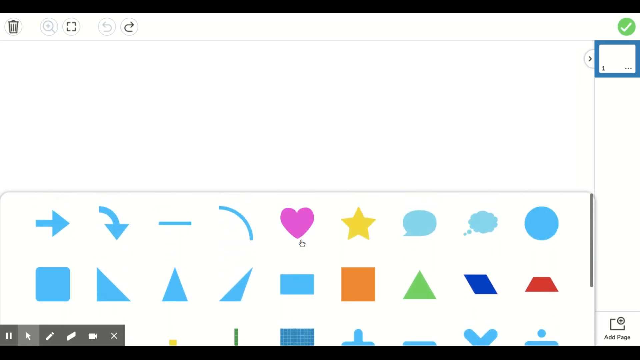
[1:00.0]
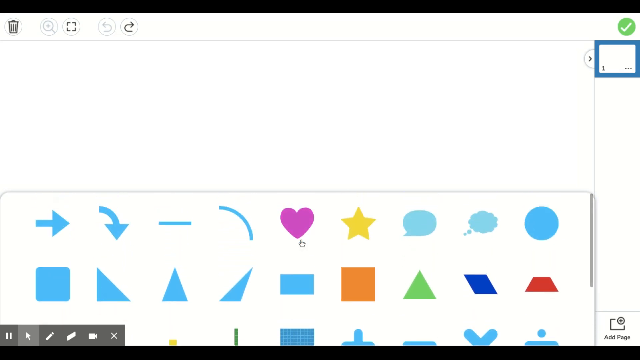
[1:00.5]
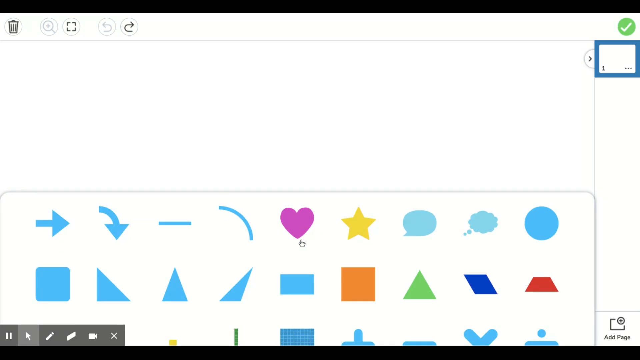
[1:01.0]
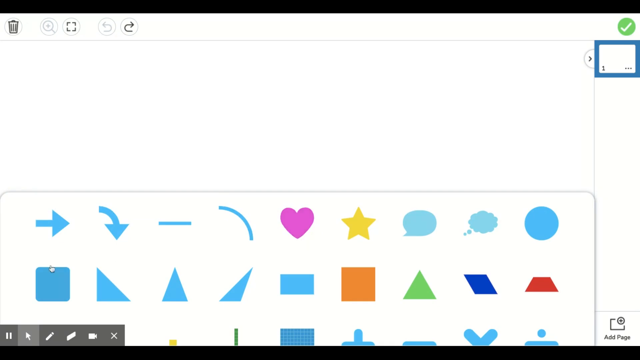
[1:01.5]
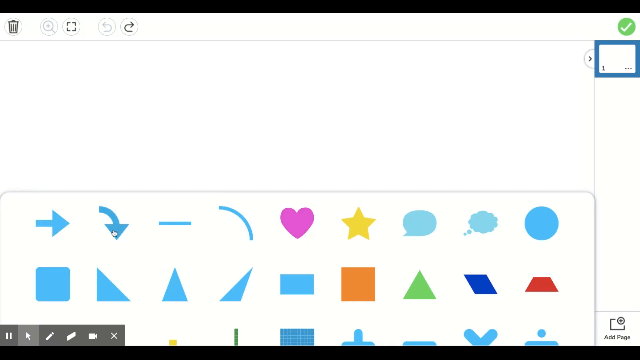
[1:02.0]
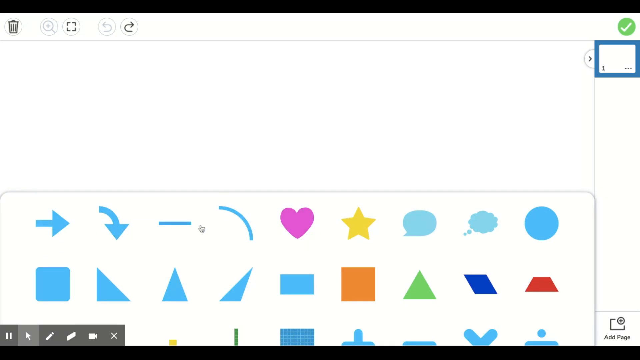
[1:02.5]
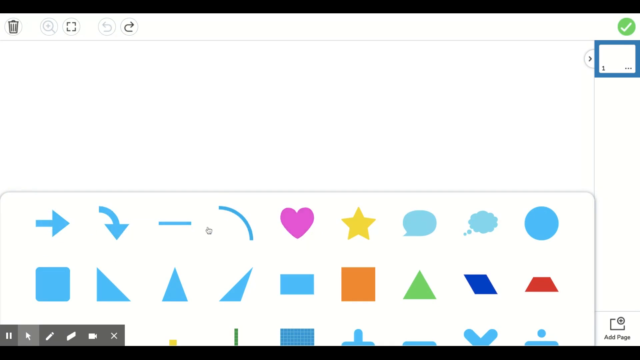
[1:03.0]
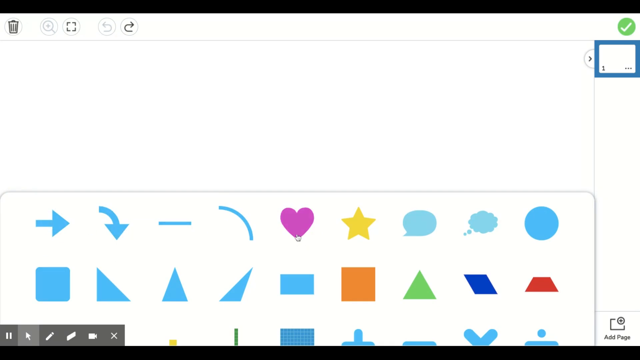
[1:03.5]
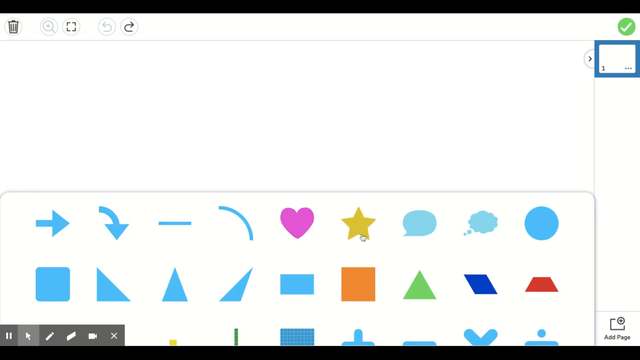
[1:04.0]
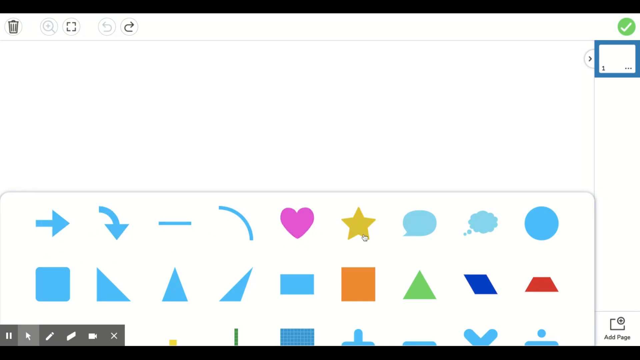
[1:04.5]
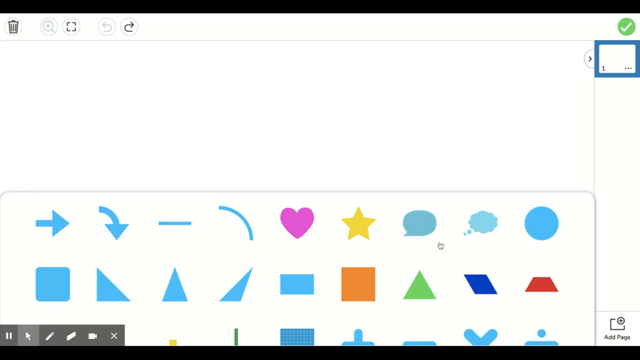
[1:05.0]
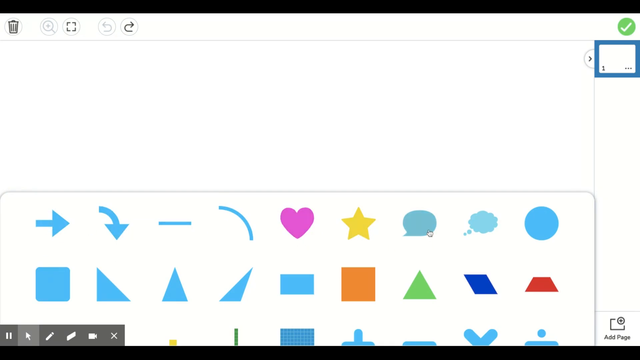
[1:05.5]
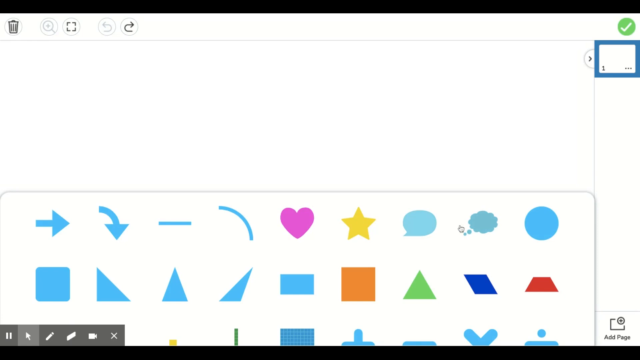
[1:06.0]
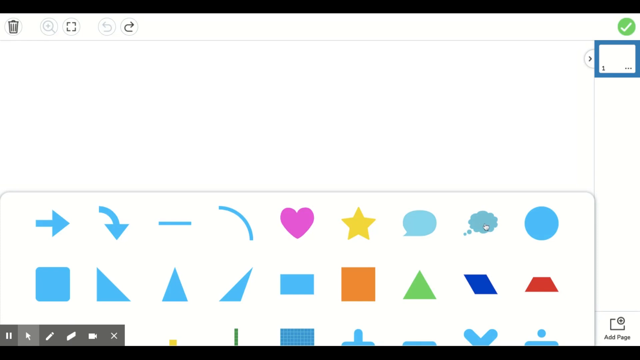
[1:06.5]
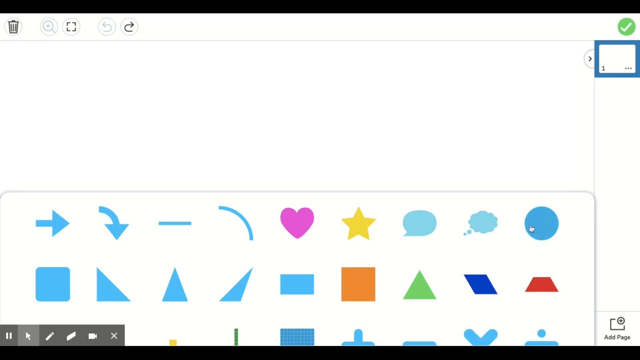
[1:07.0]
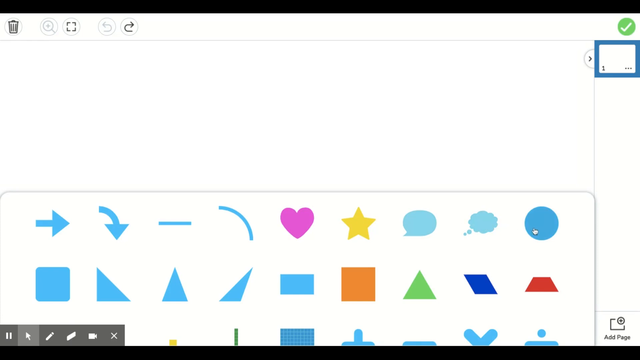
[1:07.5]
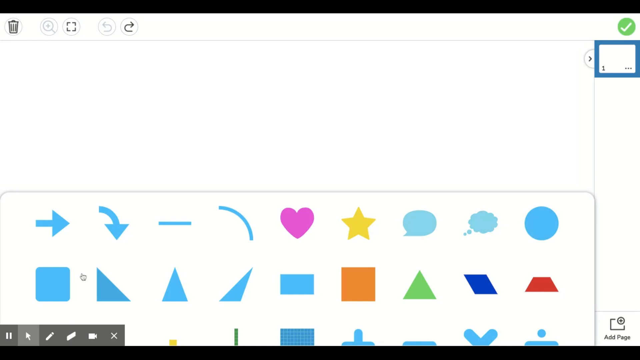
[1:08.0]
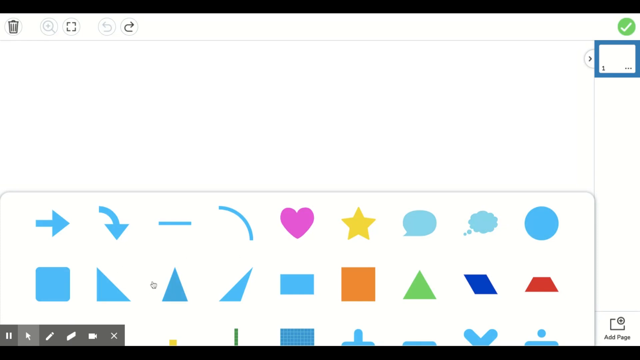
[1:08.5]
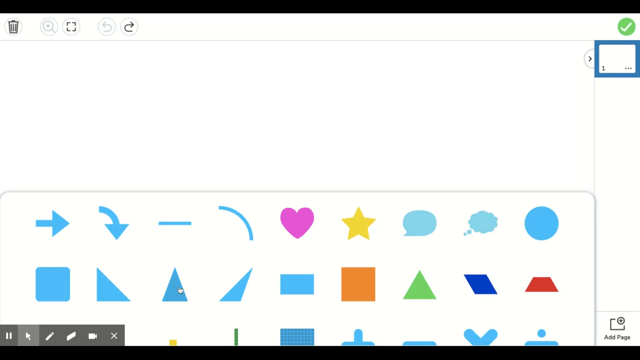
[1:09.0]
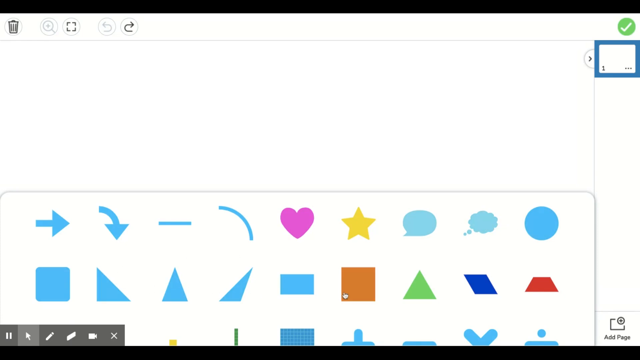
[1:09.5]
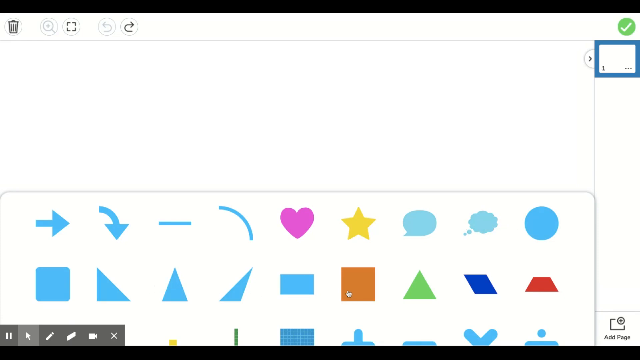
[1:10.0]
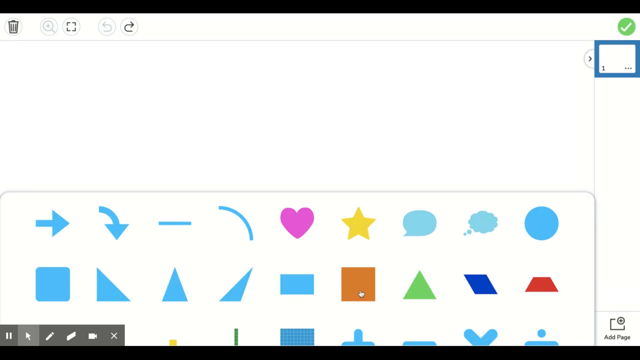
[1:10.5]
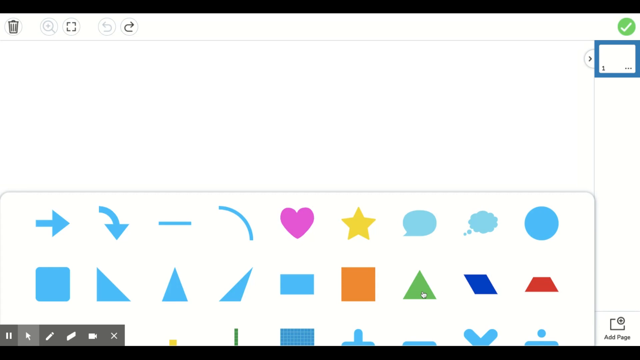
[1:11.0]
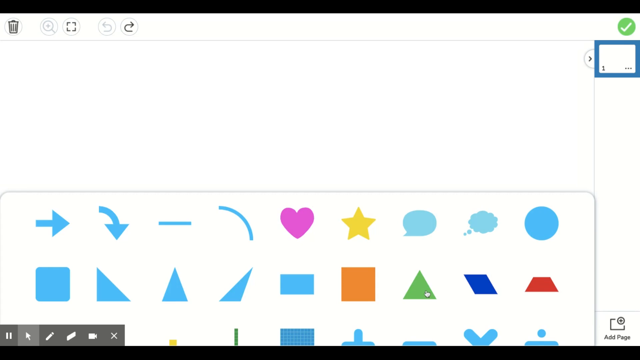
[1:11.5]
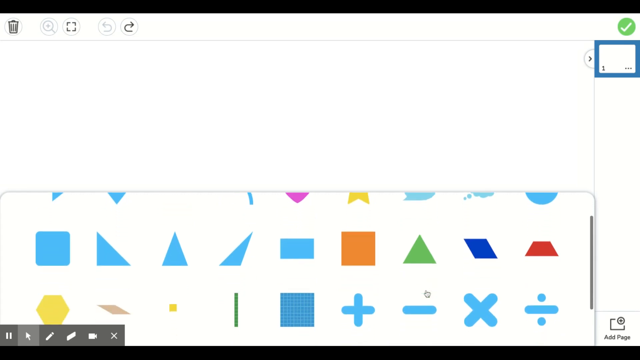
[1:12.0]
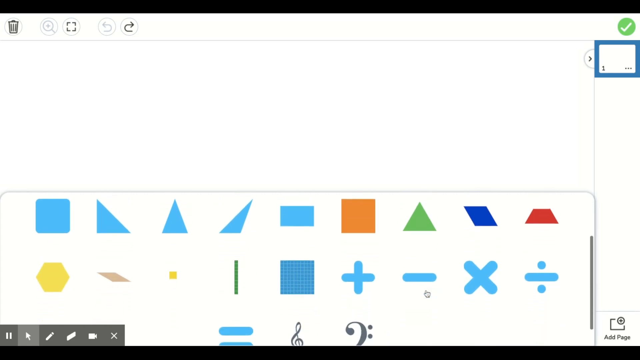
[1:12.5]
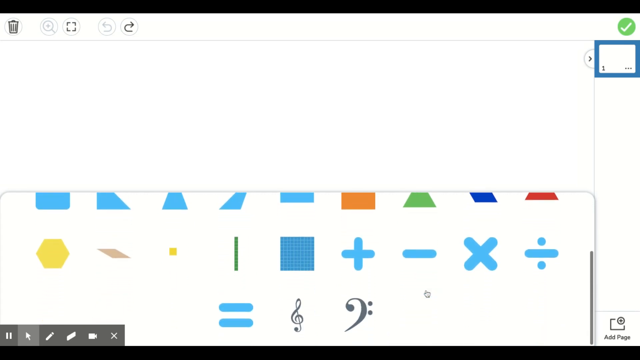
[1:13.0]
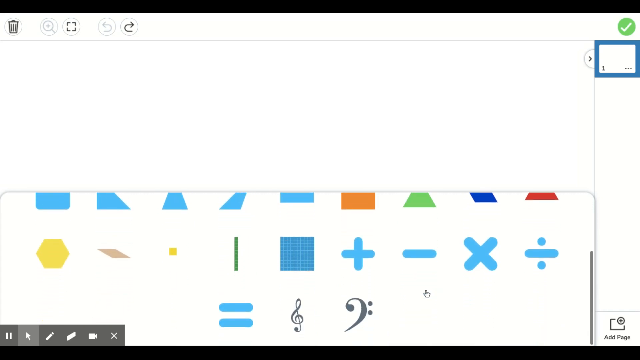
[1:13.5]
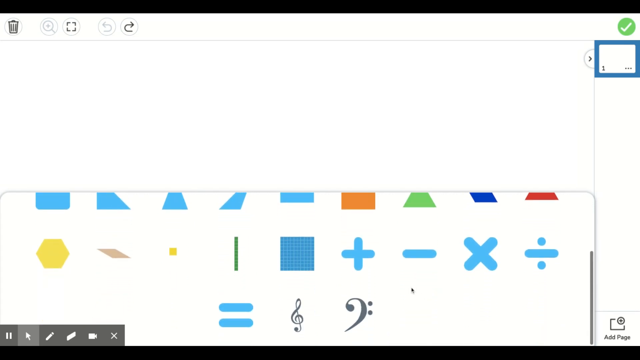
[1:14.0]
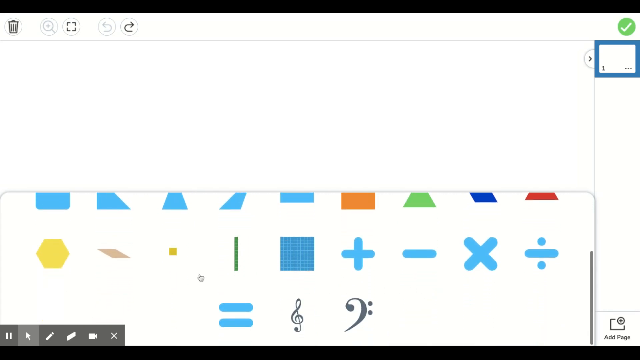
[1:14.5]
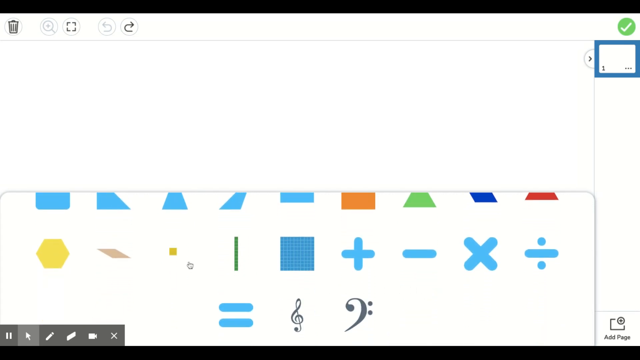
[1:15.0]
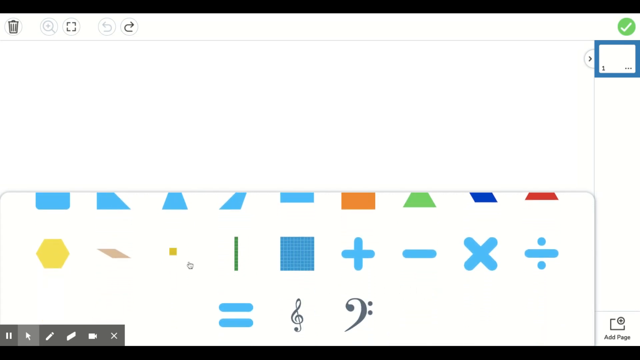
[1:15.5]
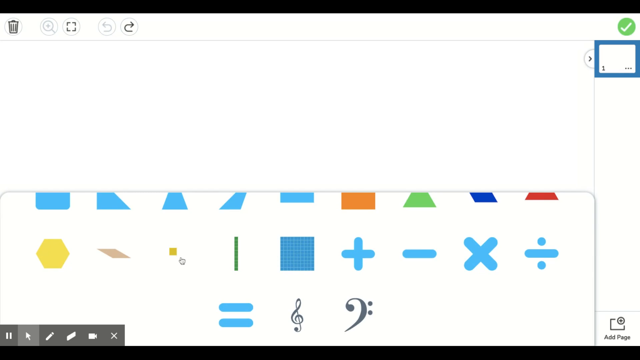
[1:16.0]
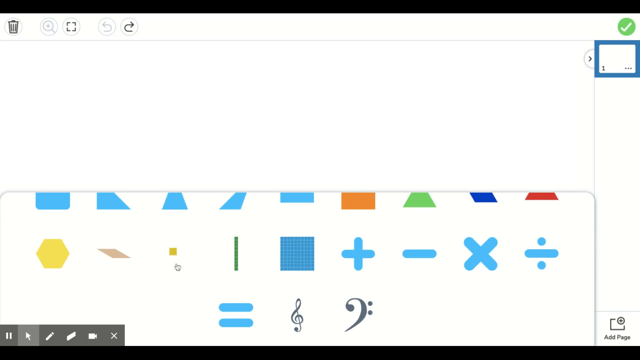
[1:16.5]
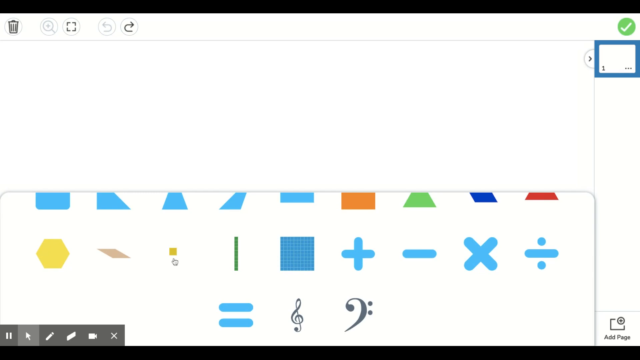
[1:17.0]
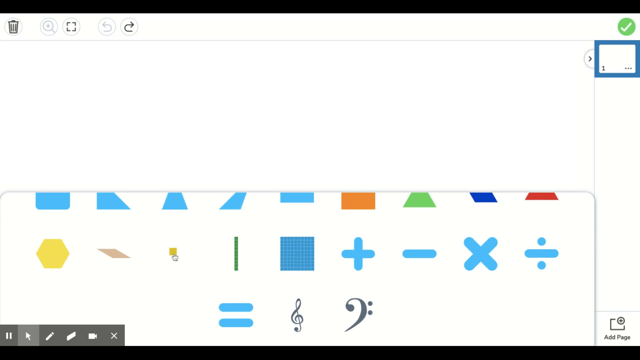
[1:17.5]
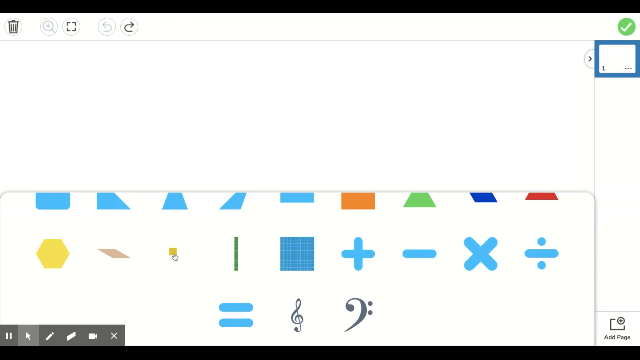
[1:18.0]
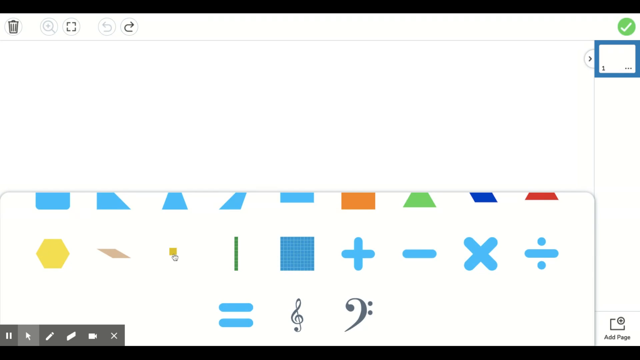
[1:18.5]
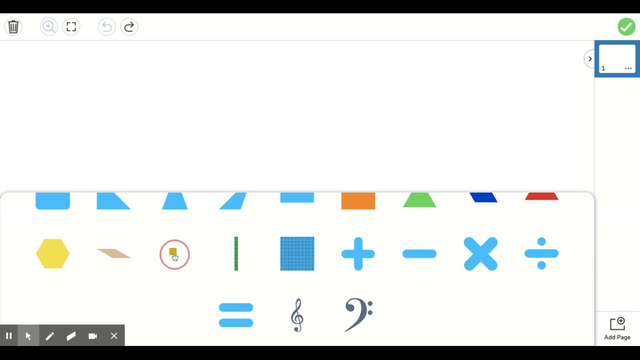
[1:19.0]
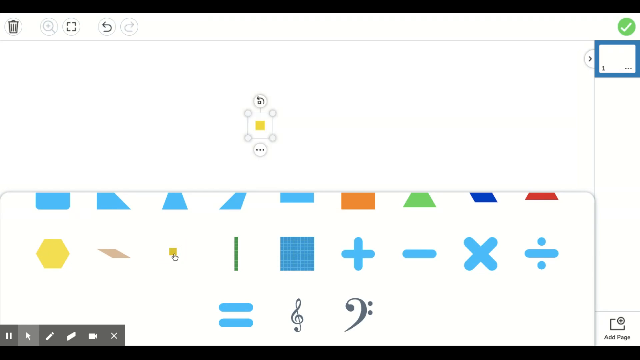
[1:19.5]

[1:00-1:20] A white screen has a couple of options at the top, including a trash can and a redo or undo button. The bottom half of the screen is taken up mostly by a number of shapes in different sizes and colors. The user moves the cursor around the different shapes, leaving it on each for a couple of seconds, potentially demonstrating the variety of options available, and scrolls down to show all of the options. The shapes include rectangles, triangles, lines, math symbols and musical notes. The user hovers over one, a small yellow square, for a while before clicking it. A red circle appears around the cursor, and the yellow square appears near the top of the page in the empty white space, with four smaller boxes so that the square can be edited.